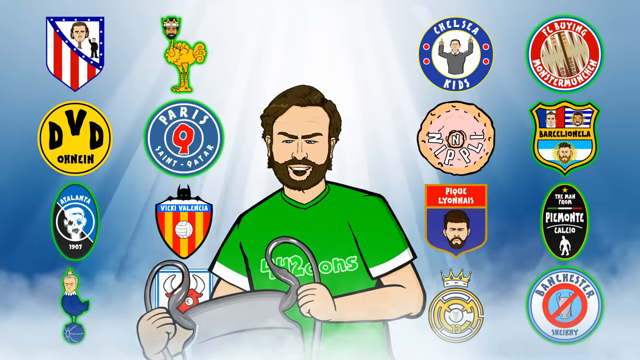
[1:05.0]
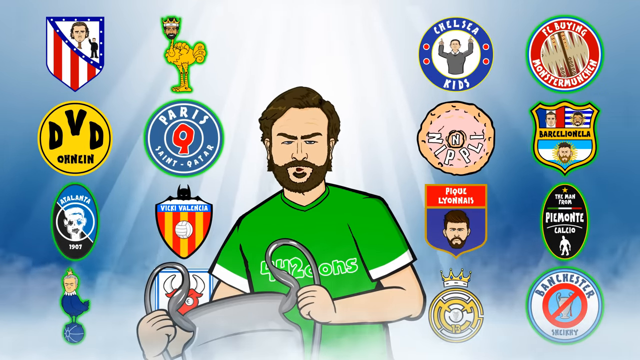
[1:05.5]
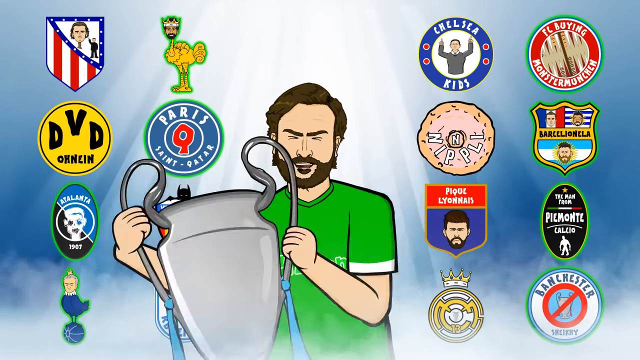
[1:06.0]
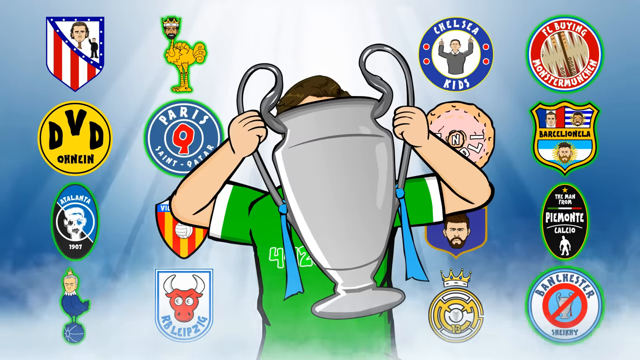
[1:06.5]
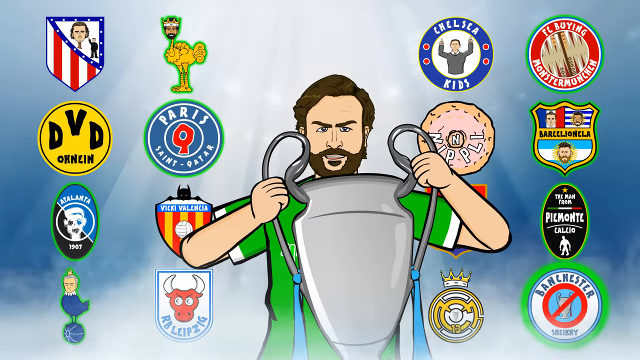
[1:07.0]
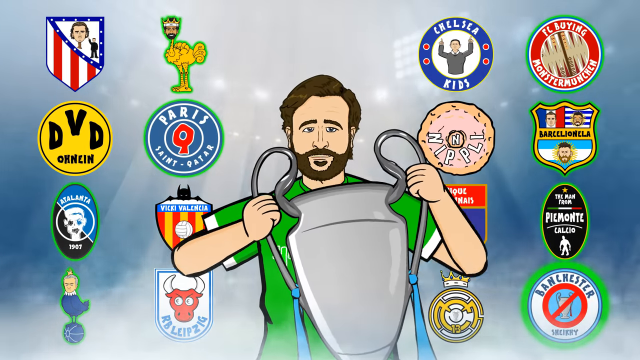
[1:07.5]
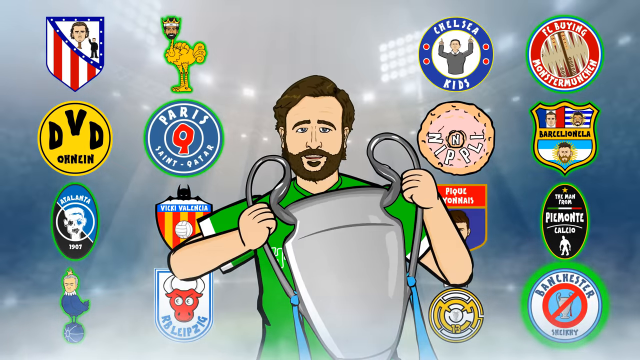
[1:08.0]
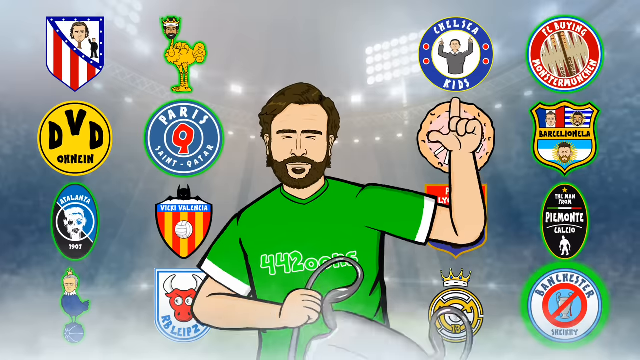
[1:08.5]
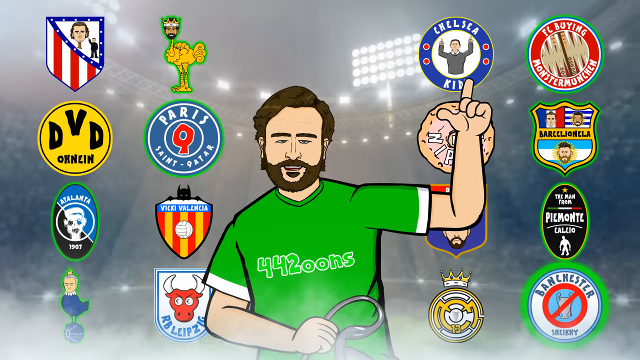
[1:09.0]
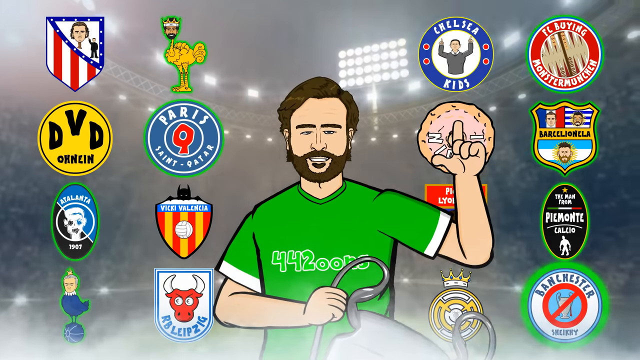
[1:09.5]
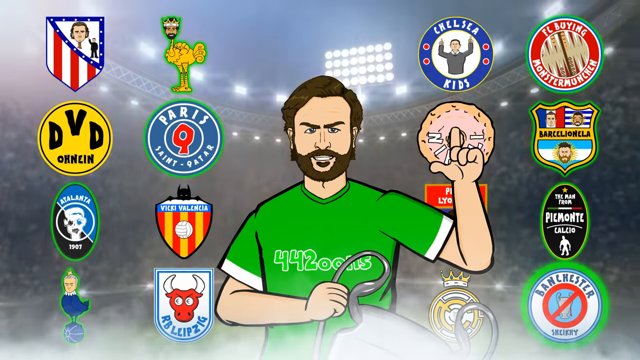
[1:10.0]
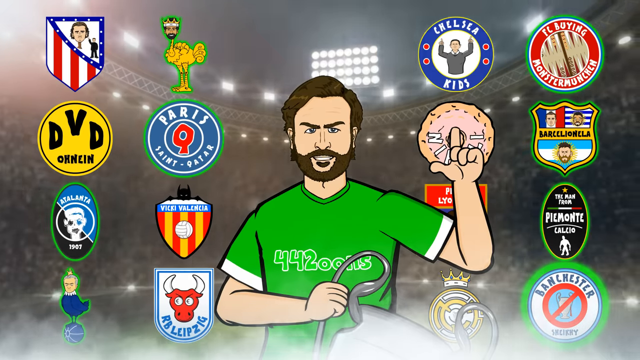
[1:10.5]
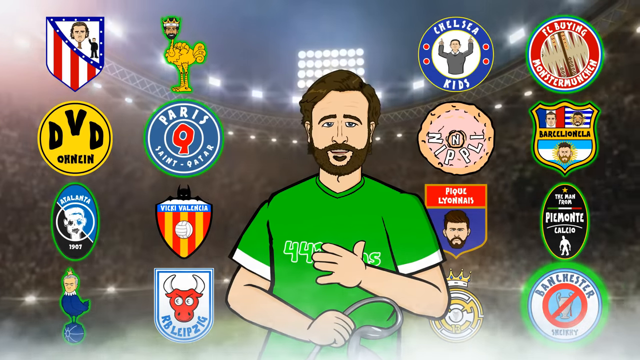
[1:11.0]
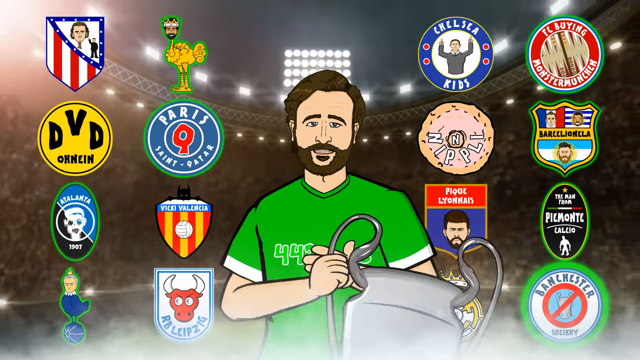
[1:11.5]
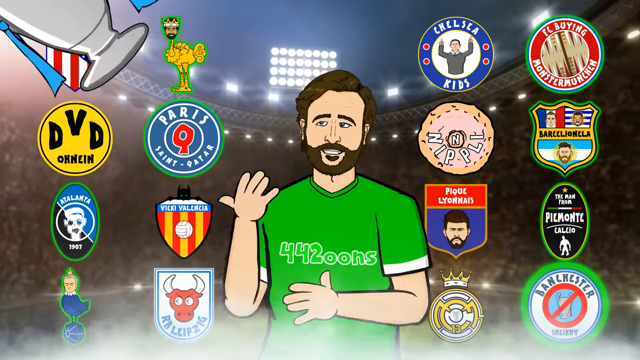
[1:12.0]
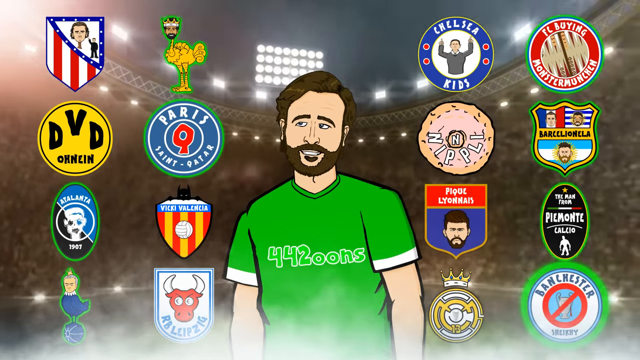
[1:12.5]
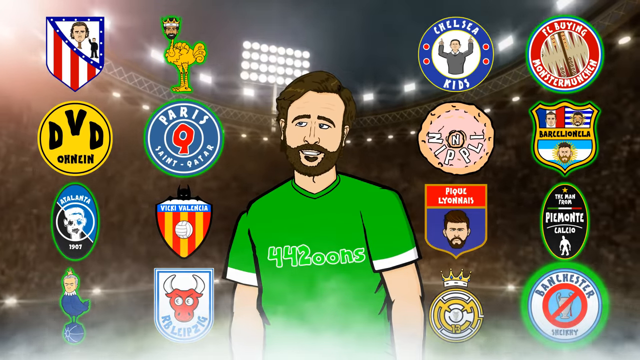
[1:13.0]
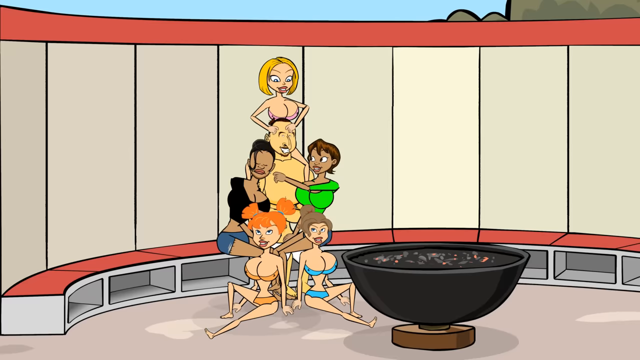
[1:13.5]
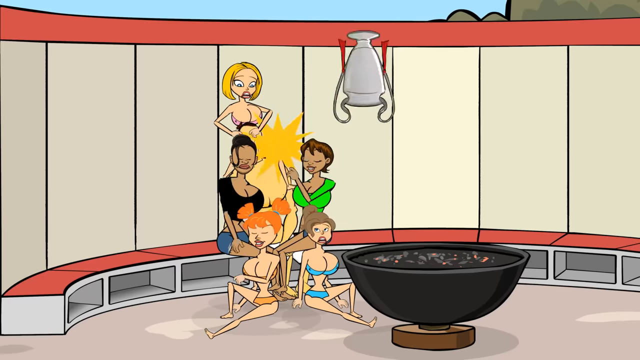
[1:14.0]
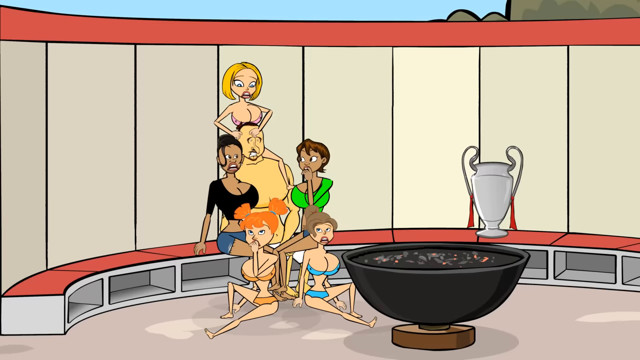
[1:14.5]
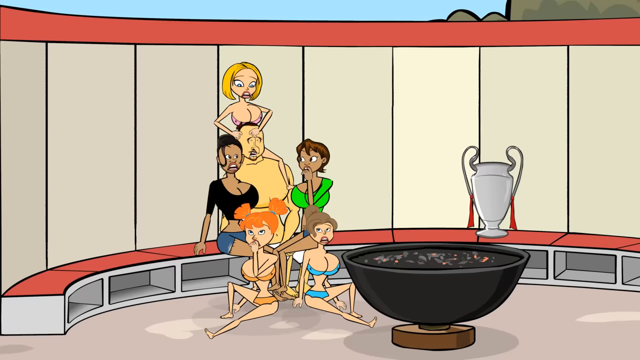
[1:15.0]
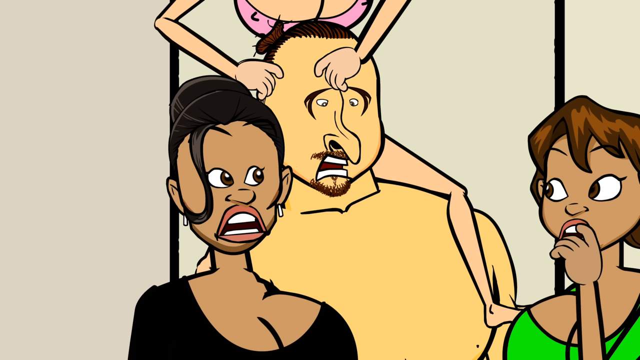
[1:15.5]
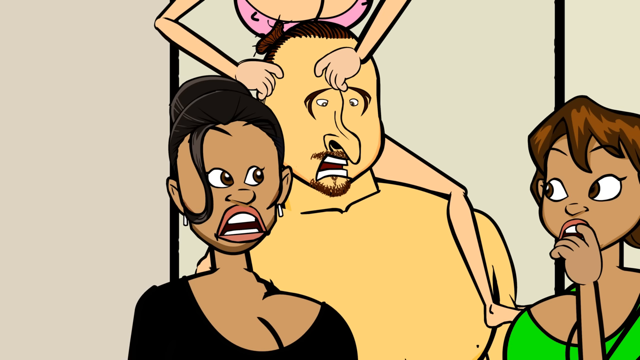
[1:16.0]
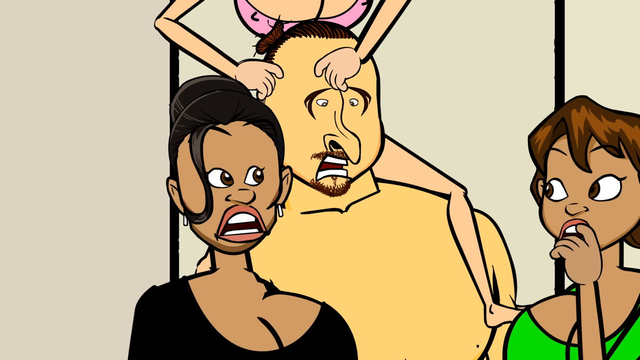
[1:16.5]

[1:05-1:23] The guy in the green jersey holds up a big gray trophy cup, with the comedic football club badges still all over the screen around him. His animated mouth is talking. The background behind him changes to what appears to be a football stadium, with no detail visible. It then cuts to what is perhaps the inside of a sauna or a locker room. The guy who looks like Ibrahimovic is shirtless, sitting on a curved bench, with buxom, bikini-clad cartoon women with very large breasts sitting around him. One woman has her legs on top of his shoulders, sitting on his shoulders and rubbing his head. The trophy comes in and hits them; it seems the guy in green threw it into the locker room scene, hitting Ibrahimovic and the women, and it lands on the bench they are sitting on. The whole thing appears to be a comedic animation imitating well-known football players.